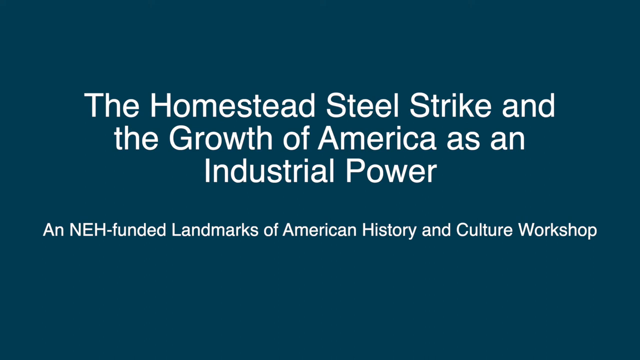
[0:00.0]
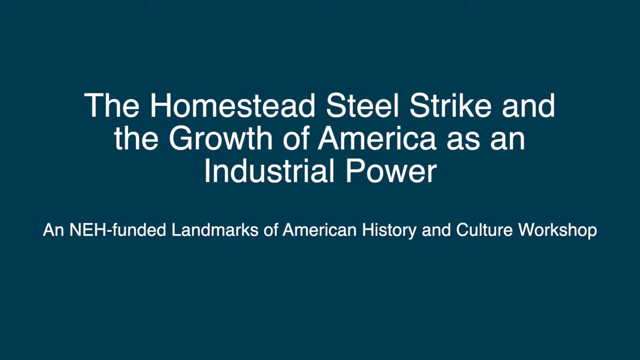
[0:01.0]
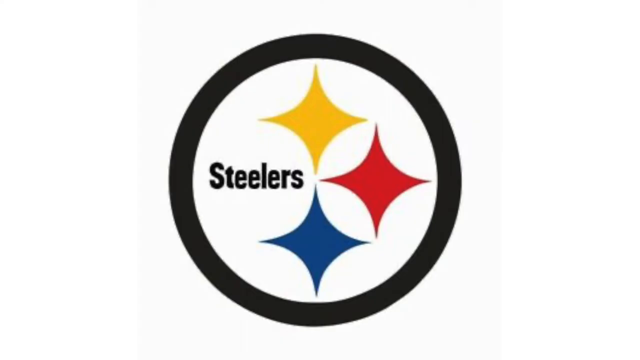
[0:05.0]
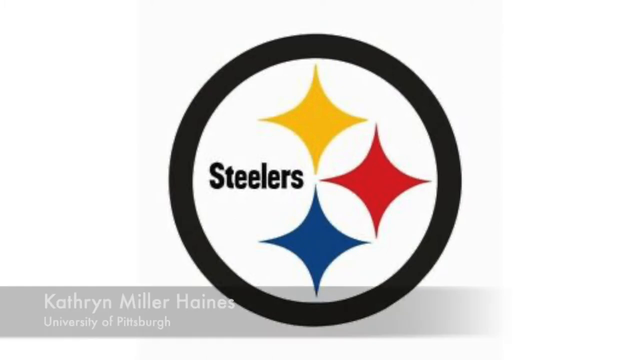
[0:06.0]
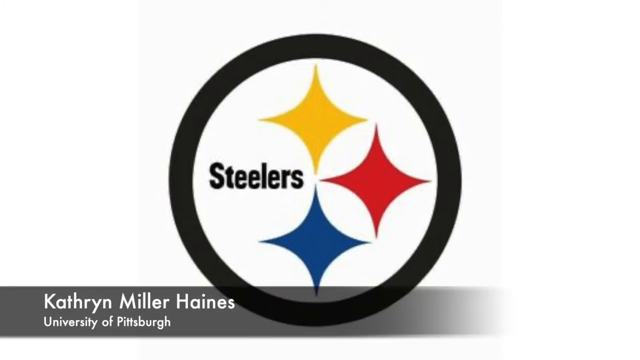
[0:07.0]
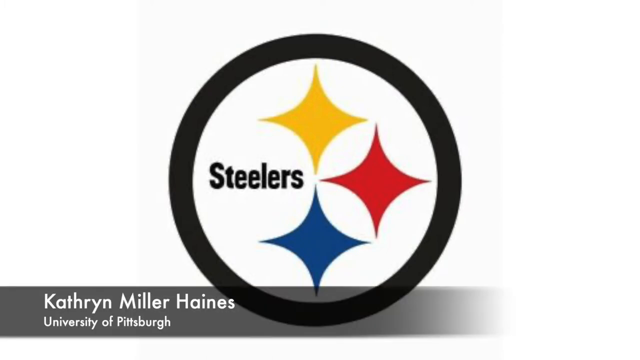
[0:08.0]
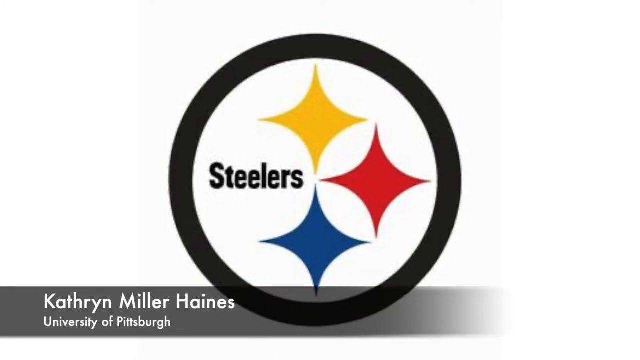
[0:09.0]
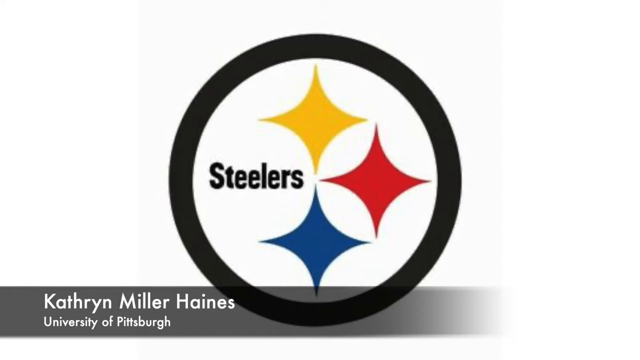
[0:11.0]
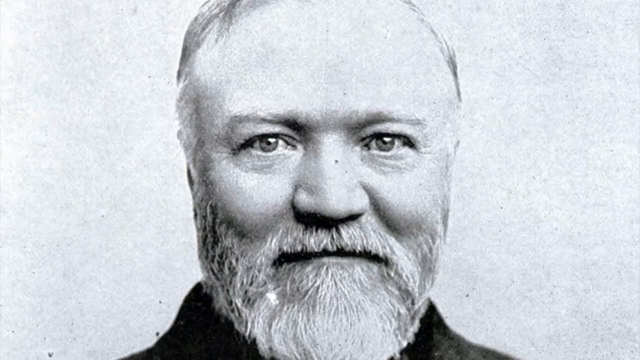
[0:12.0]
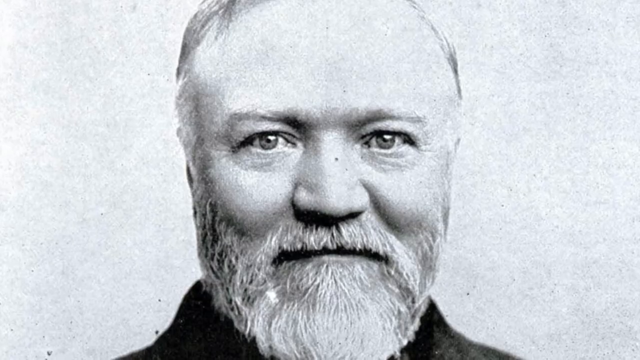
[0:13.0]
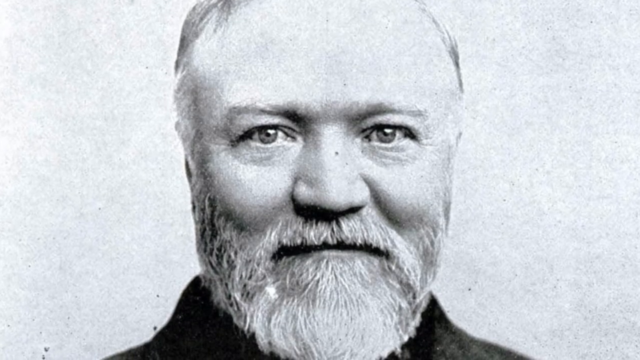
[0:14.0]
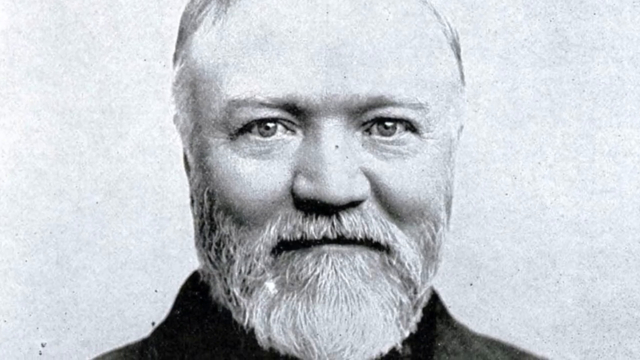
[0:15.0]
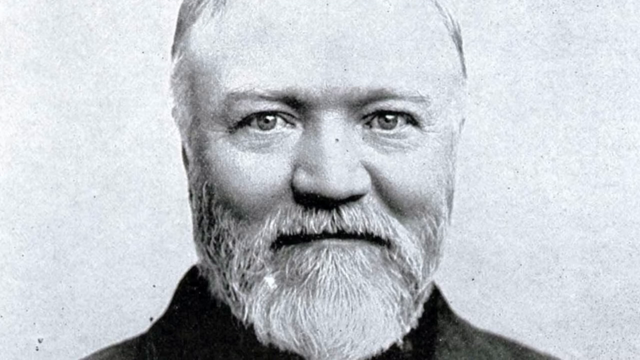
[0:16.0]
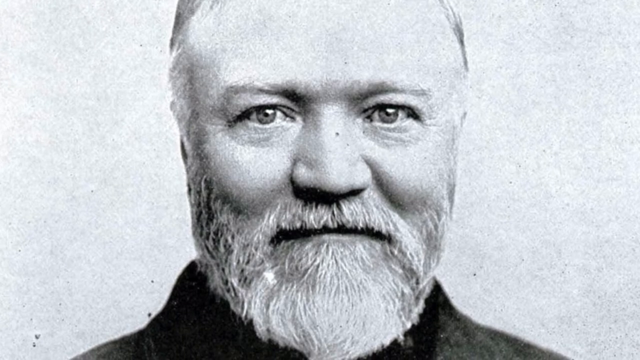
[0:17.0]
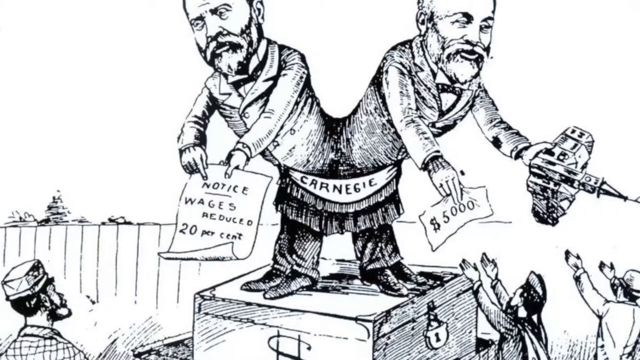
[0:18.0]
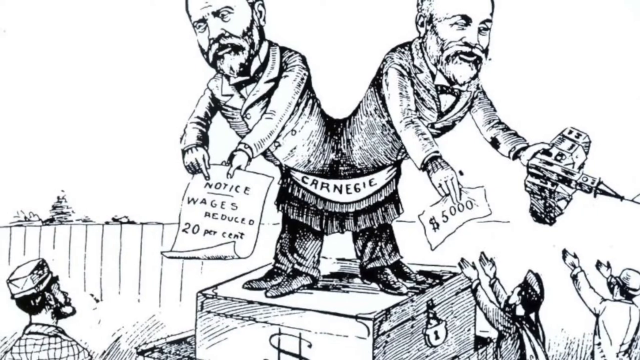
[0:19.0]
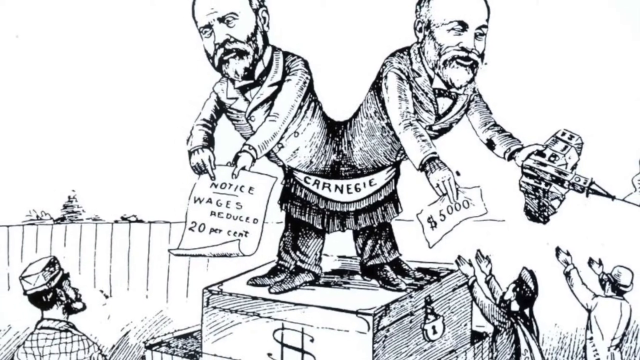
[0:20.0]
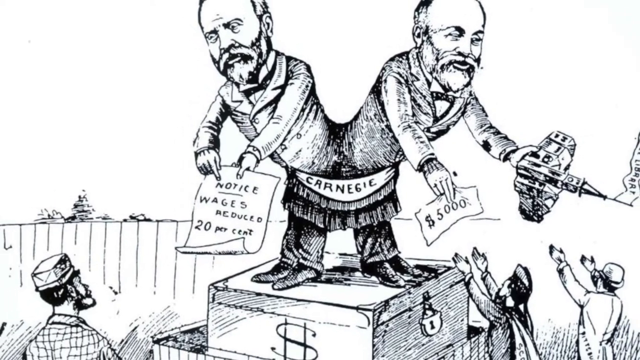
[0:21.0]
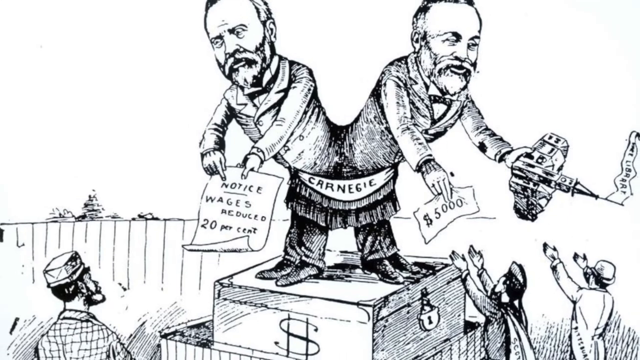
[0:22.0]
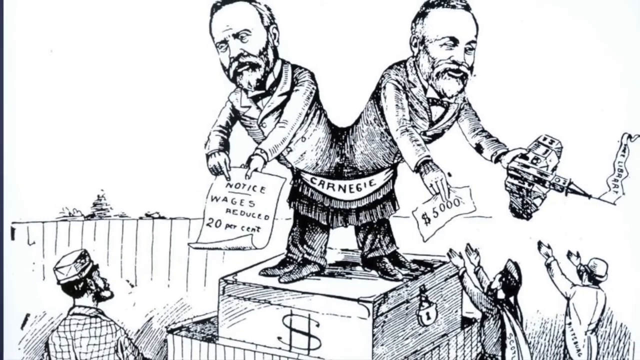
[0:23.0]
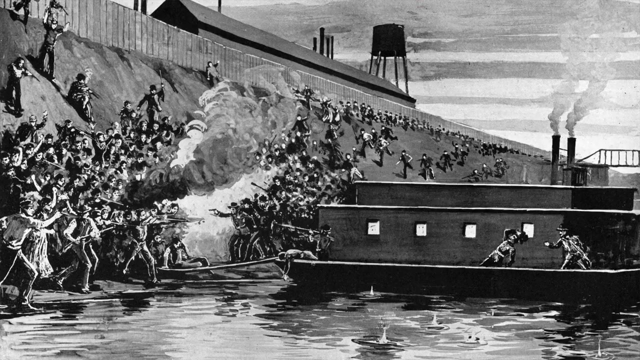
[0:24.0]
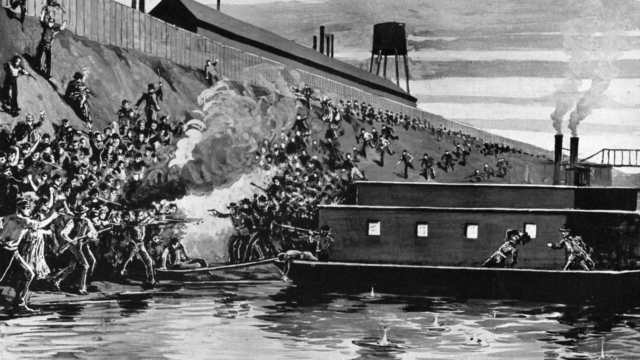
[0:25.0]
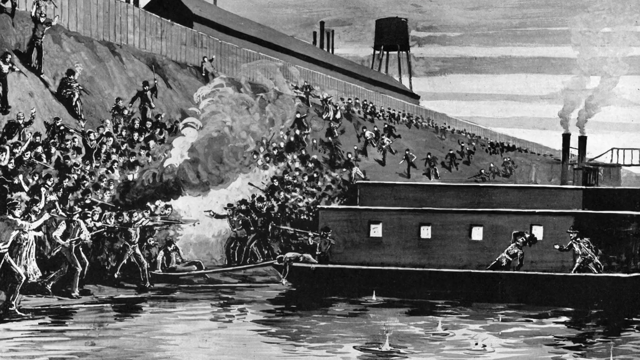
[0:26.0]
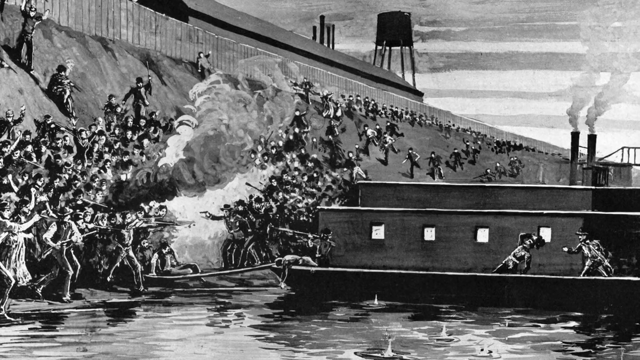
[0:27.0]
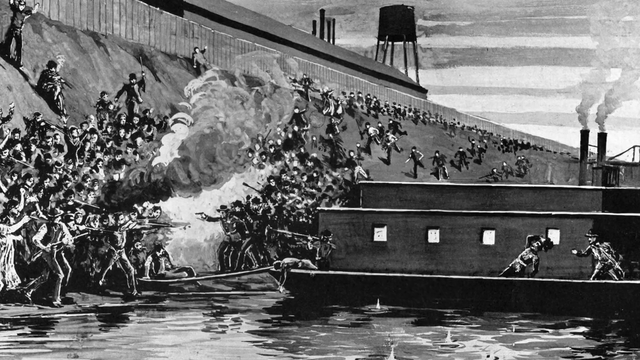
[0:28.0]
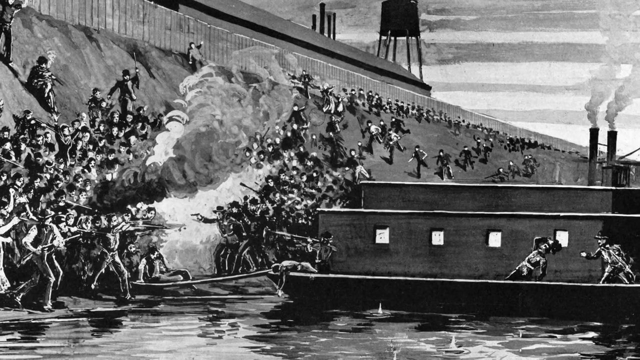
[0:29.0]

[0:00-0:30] The video opens with white text on a blue background. In the center, in a title font, the text reads "The Homestead Steel Strike and the growth of America as an industrial power." Below it, in smaller text, it says "an NEH-funded Landmarks of American History and Culture workshop." This text remains on screen for a moment, then transitions to a white screen with a logo: the text "Steelers" on the left side, a yellow four-pointed star on top, and other similar stars to the right and bottom, the one on the right red and the one on the bottom blue, all inside a black circle. The logo is shown for a few moments before transitioning to a black and white image of an older-looking man with short hair, a wide nose and a full beard. The camera looks at the image close up on his face and pans down slowly; he seems to be wearing a dark shirt with a high neck. Next comes an image of two men with full beards who seem to be joined at the hip, both holding down pieces of paper. The paper held by the man on the right says "$5,000" and the one on the left says "notice wages reduced 20 percent." The man on the right is also holding what appears to be a model of a church. Where they are joined at the hip, a sign hanging from them says "Carnegie." The two men are standing on a block, and there appears to be a crowd standing around them reaching out; the crowd is very small, consisting of only about three people. The camera zooms out from the image. It then transitions to a battle scene: a crowd of people on the left side and another crowd on the right side appear to be shooting at one another, with a large amount of smoke between them. On the right side there appears to be a boat, some sort of steamship, with a few people on it. In the background is a hill with a fence, with people scattered about on the hill seeming to be running around. Behind the hill on the fence is some sort of building with a silo next to it. The camera slowly zooms in on the center of the image.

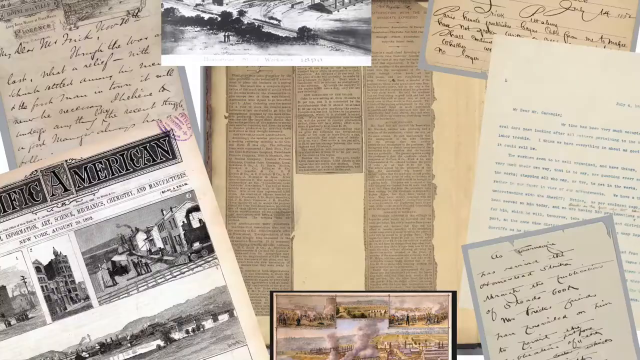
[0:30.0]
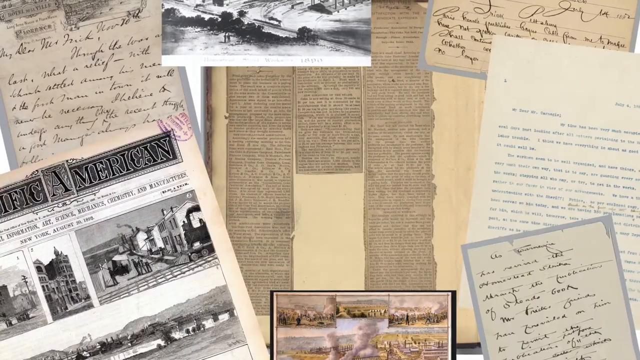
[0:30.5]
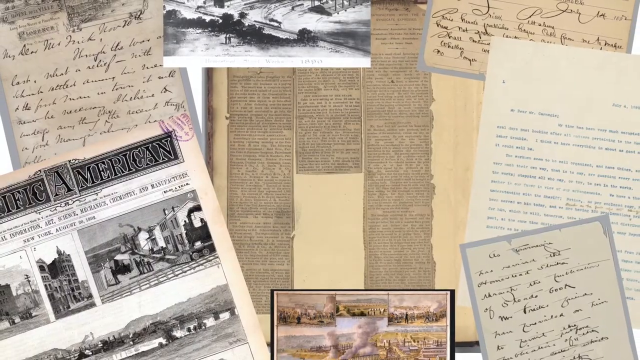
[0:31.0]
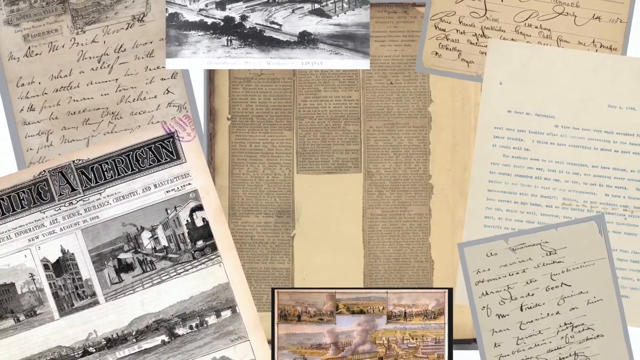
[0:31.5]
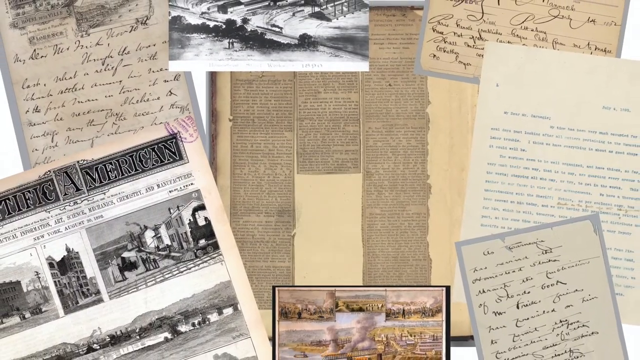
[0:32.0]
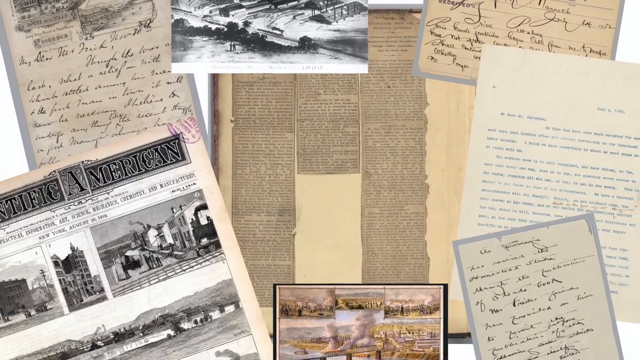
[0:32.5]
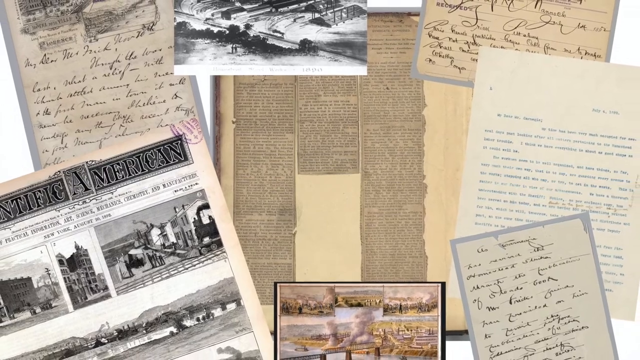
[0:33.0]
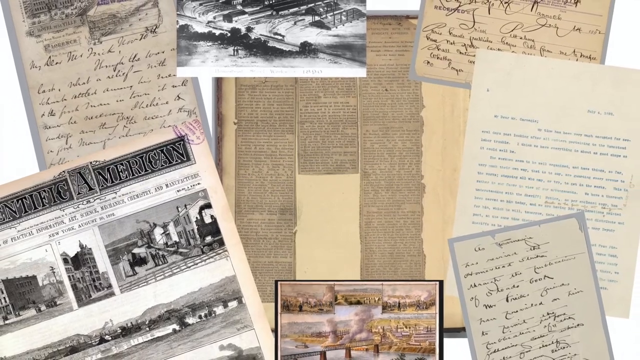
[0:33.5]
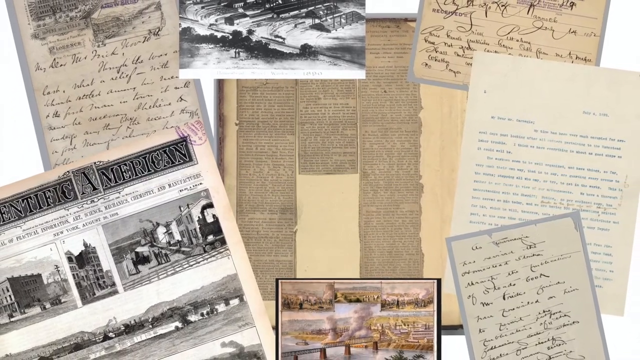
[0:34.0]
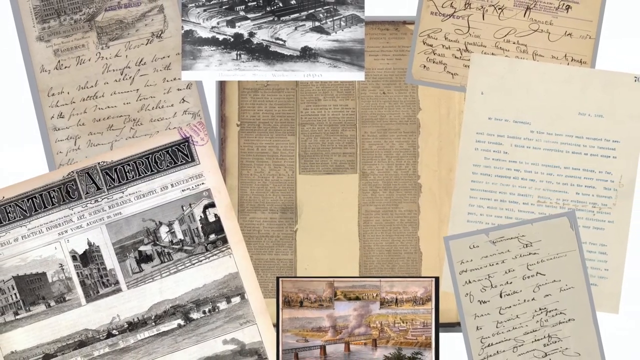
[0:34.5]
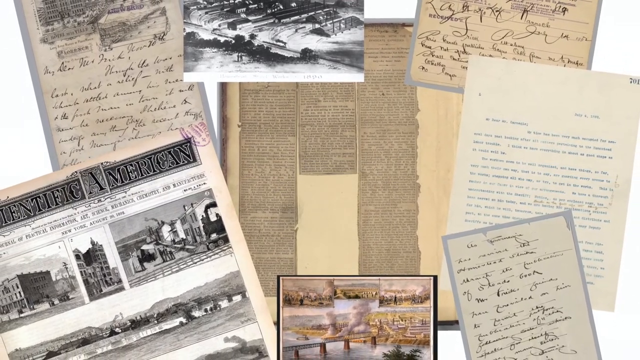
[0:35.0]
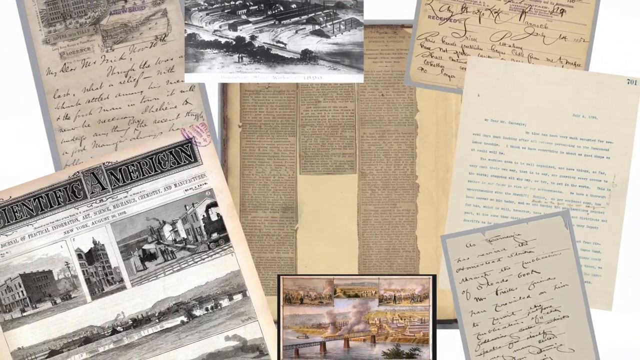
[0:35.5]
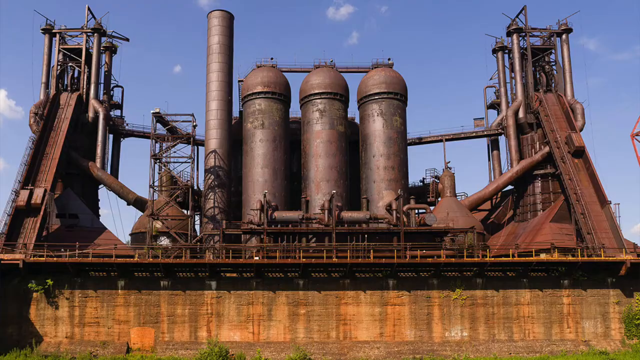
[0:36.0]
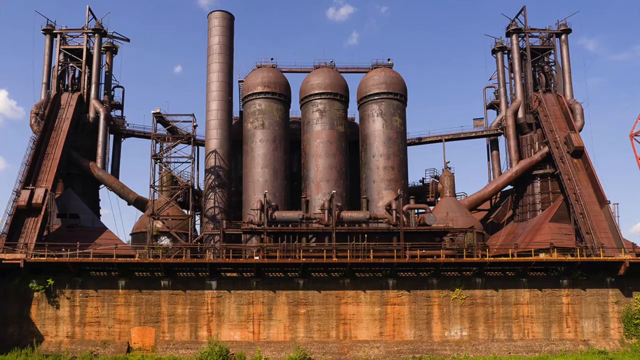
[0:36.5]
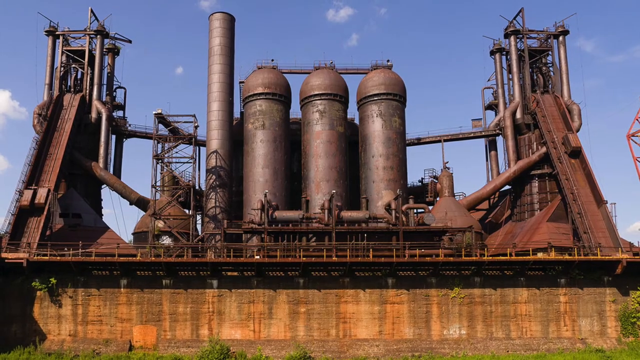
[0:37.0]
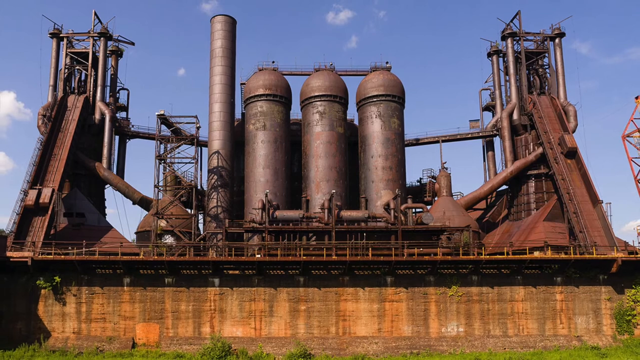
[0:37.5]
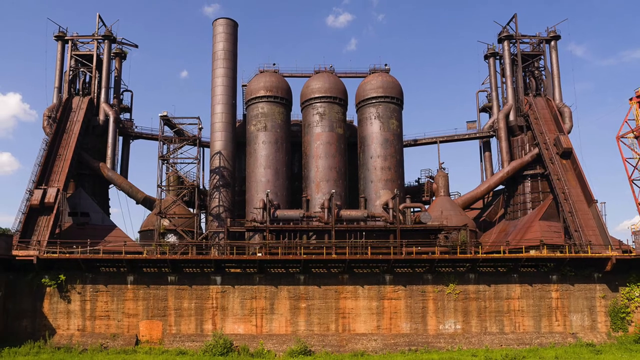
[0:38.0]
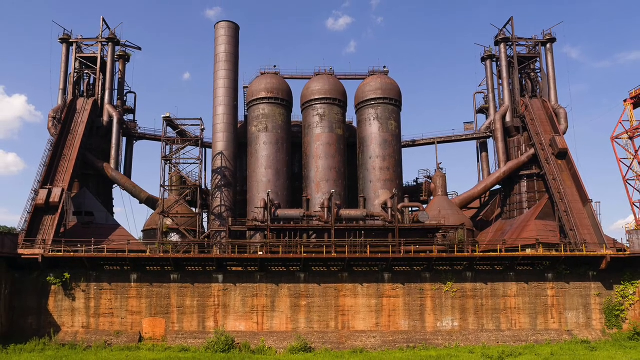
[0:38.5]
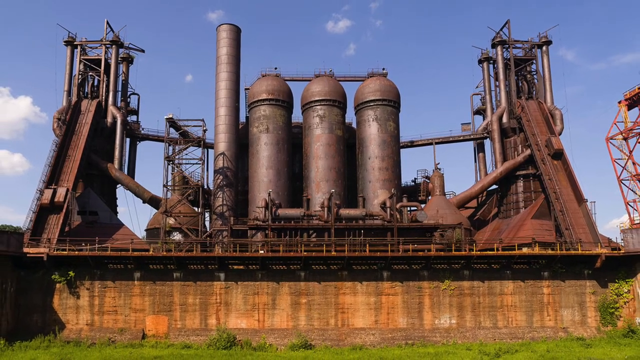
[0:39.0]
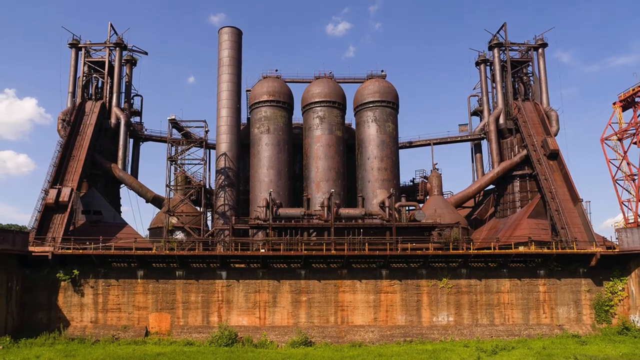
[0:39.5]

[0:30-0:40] The video now shows a lot of what appear to be newspaper clippings and notes. In the center there appear to be multiple long clippings arranged on a brown background. On the right side are multiple notes; the ones at the top and bottom are handwritten, and the one in the center appears to be in a typewriter font. At the top is an image that appears to show a field with a couple of people standing in it; it is cut off on its top side. In the bottom right is another newspaper article with pictures. There appear to be two words at the top of the newspaper; the one on the left is cut off, and the one on the right reads "American." Above this is another handwritten note. The camera slowly zooms out, and as it does, the word on the left comes into the frame and appears to be "scientific." The video then transitions to an image of multiple rusted silos. On the left and right, two conveyor belts lead up to some sort of towers with multiple pipes on their sides. A catwalk runs along the front side of the structure all the way to the left and right, and below it is a metal wall, also rusted. The camera slowly zooms out, showing a field in front of the structure.